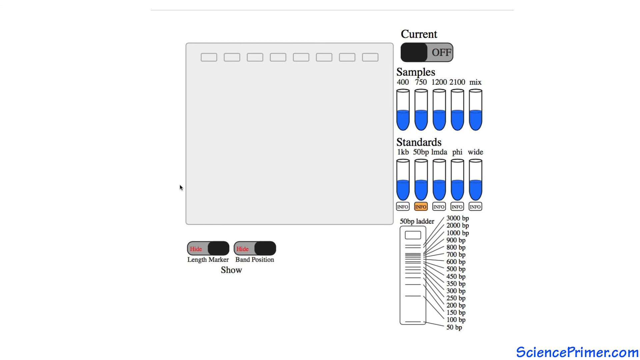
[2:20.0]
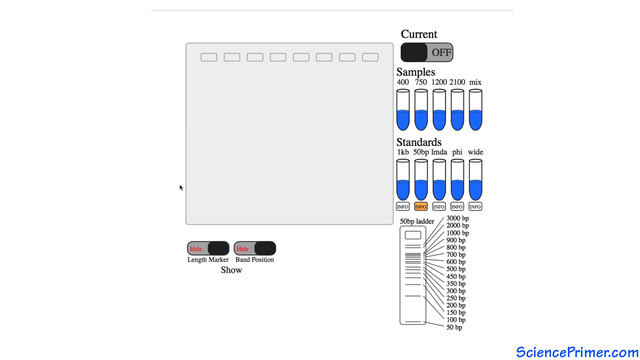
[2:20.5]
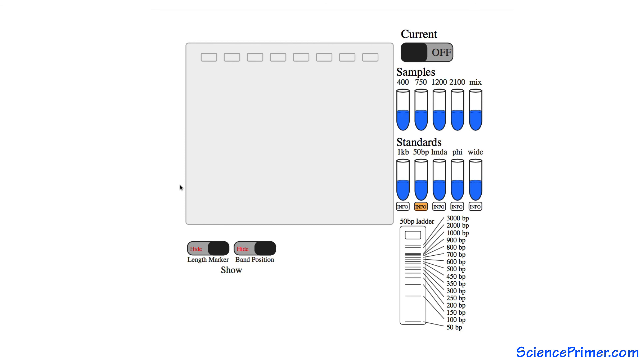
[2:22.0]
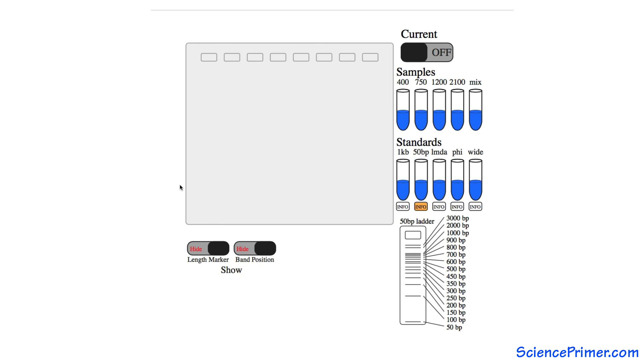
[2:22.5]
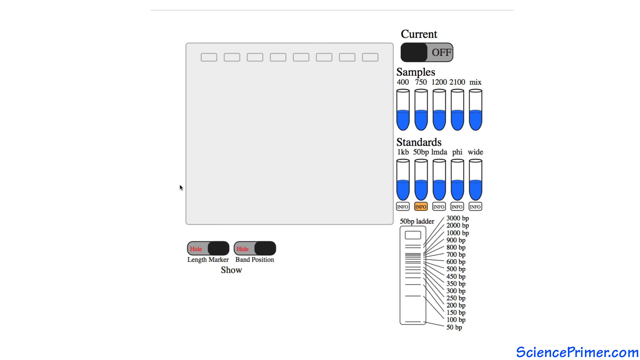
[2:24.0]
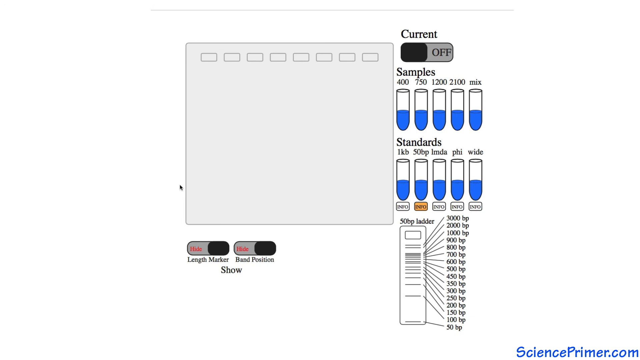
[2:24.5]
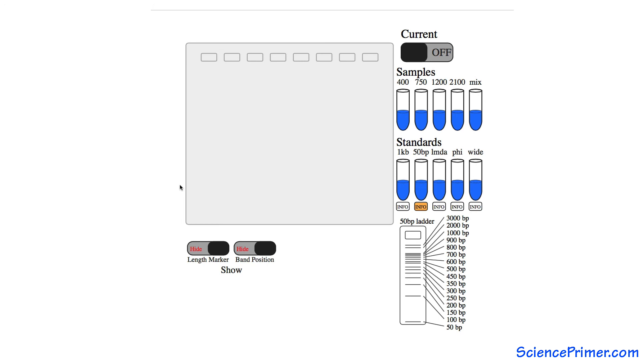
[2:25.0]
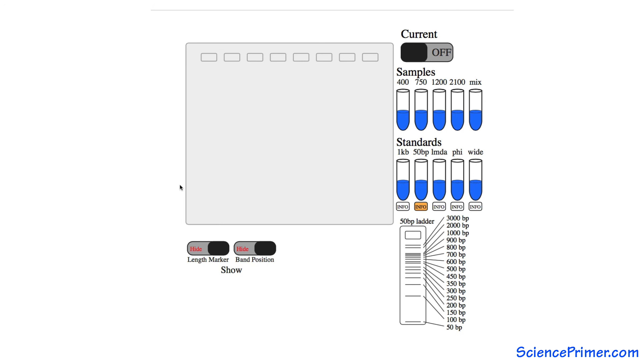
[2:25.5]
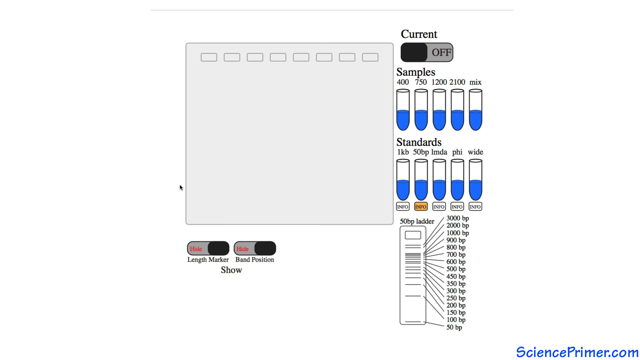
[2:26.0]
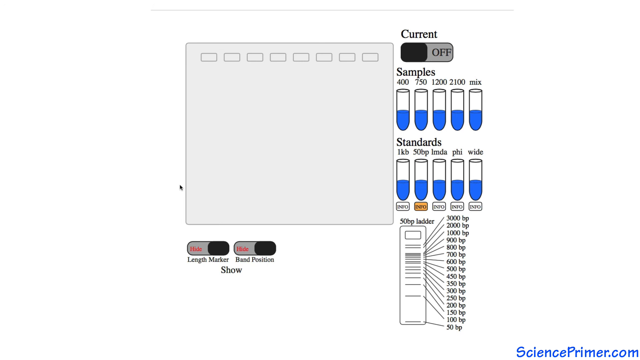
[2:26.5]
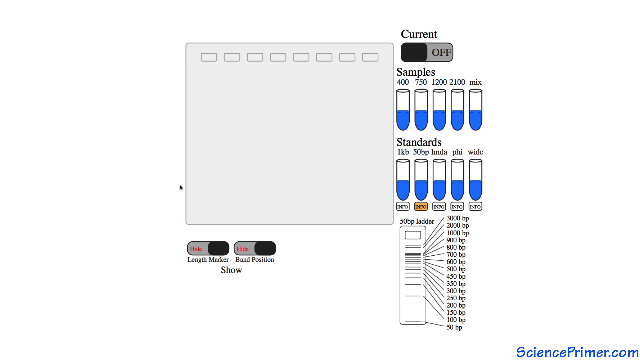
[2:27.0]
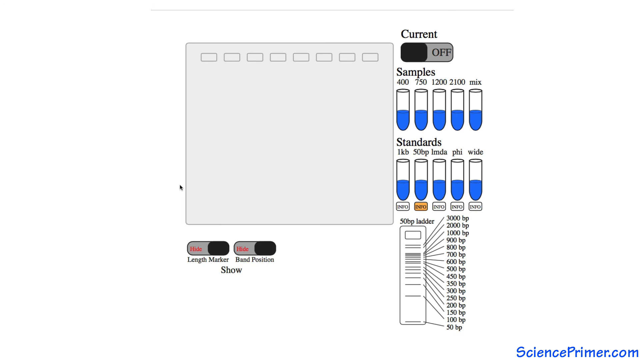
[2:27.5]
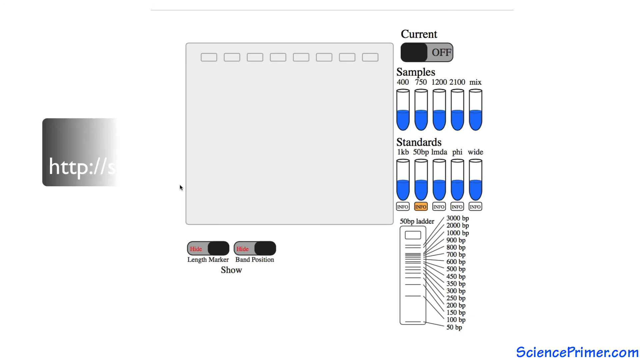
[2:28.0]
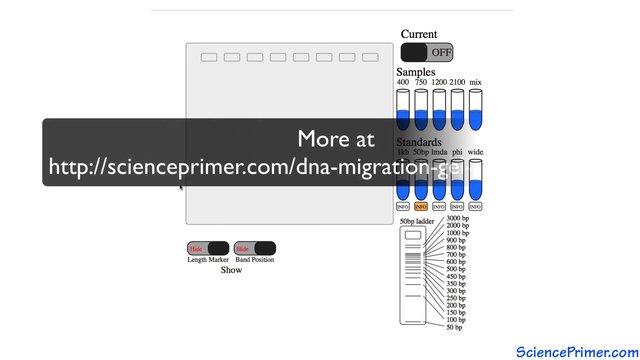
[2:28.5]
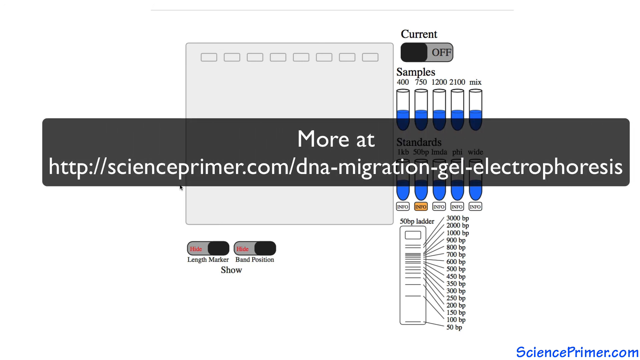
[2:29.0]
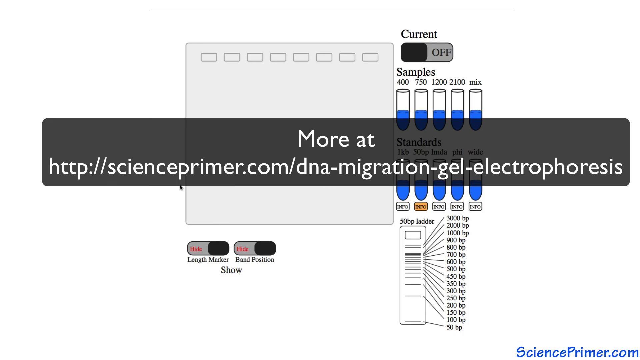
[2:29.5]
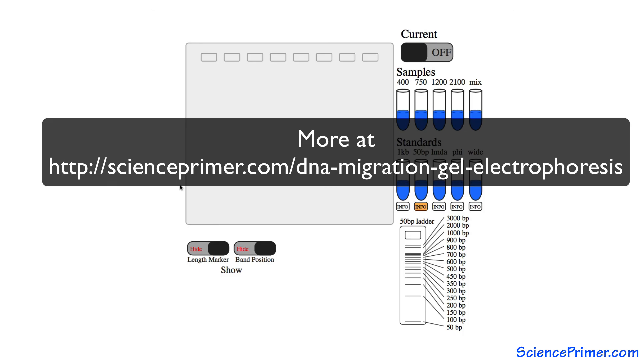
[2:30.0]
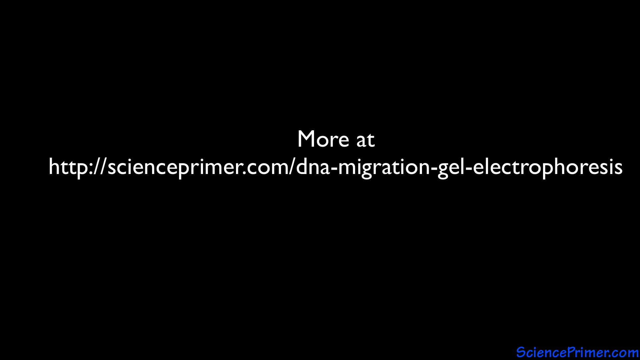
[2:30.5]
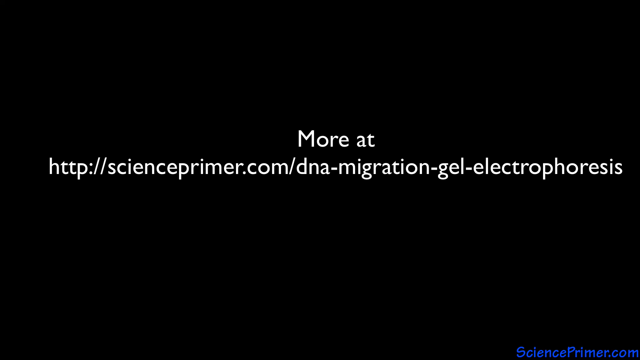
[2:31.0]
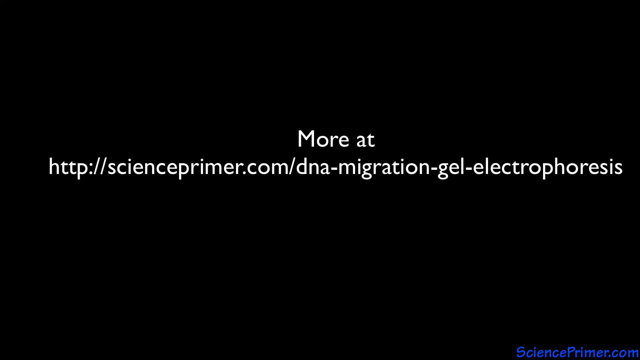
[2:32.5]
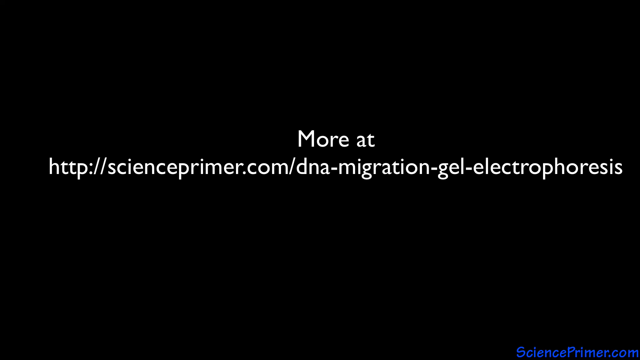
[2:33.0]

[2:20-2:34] The second rectangle on the bottom row of test tubes is still highlighted in orange. These rectangles seem to say the word "info," but they are very blurry. The user's cursor rests on the left side of the experiment page. A link appears across the screen on a translucent gray background, with "More At" above it. The link reads "scienceprimer.com/dna-migration-gel-electrophoresis." The URL is then displayed on a black screen instead of the experiment page, in white text centered on the screen.